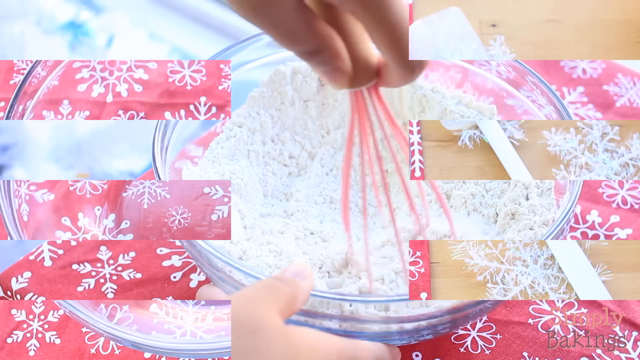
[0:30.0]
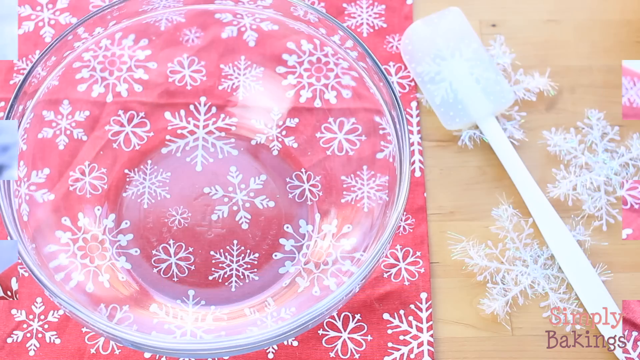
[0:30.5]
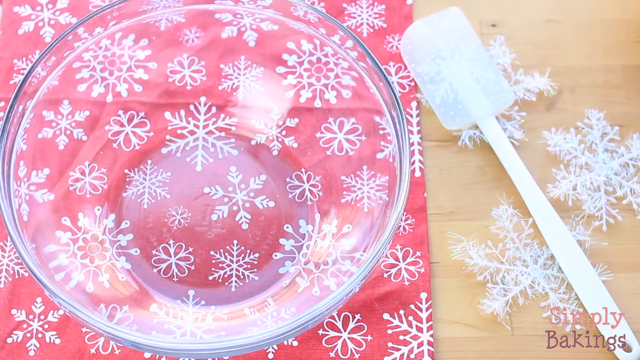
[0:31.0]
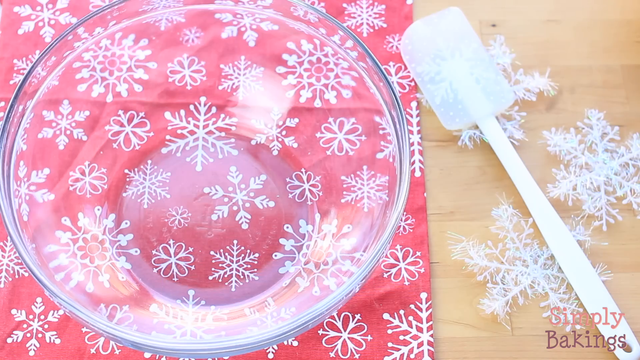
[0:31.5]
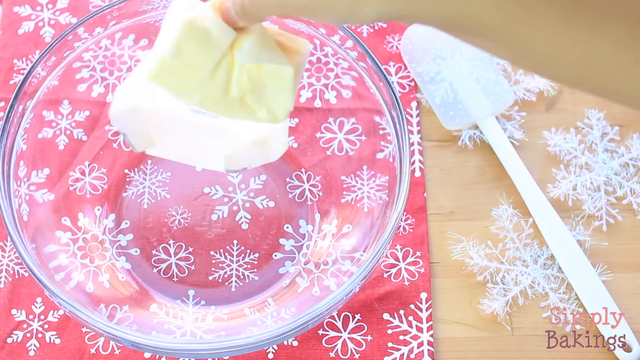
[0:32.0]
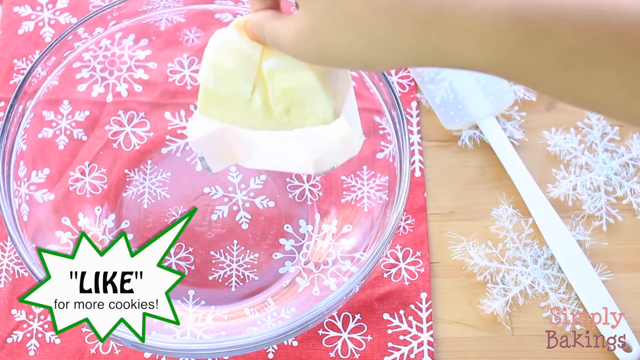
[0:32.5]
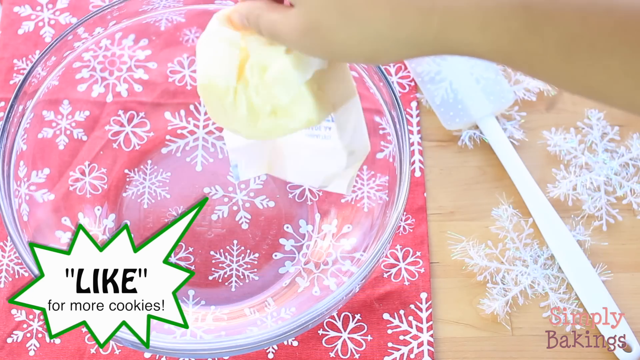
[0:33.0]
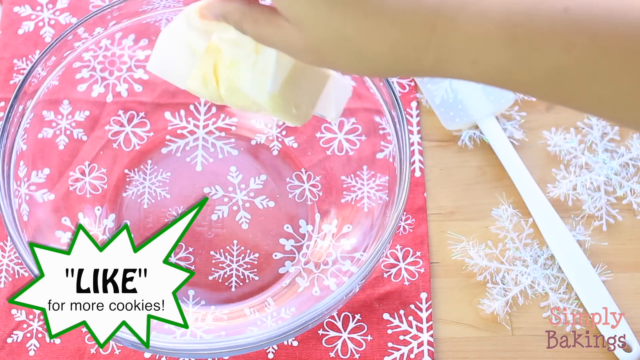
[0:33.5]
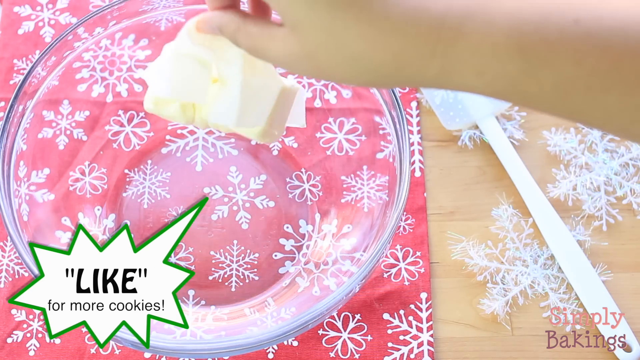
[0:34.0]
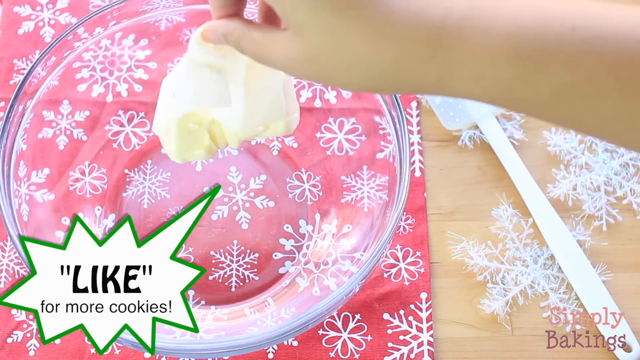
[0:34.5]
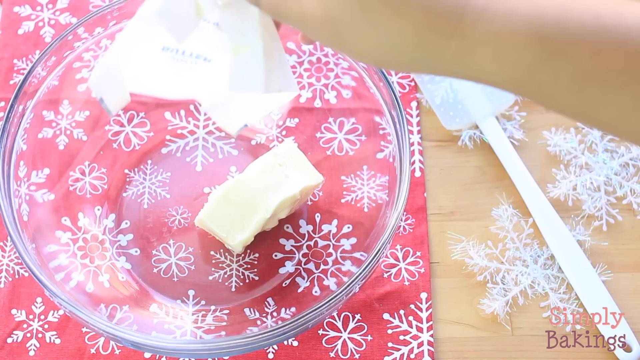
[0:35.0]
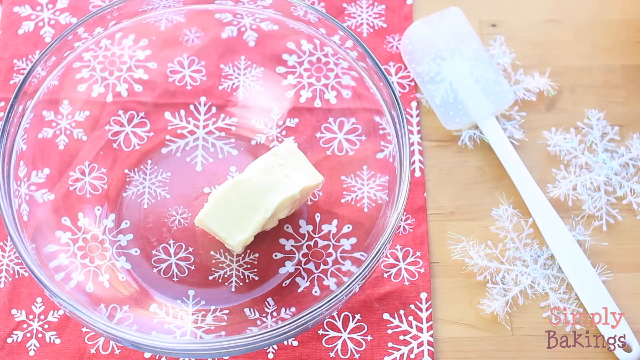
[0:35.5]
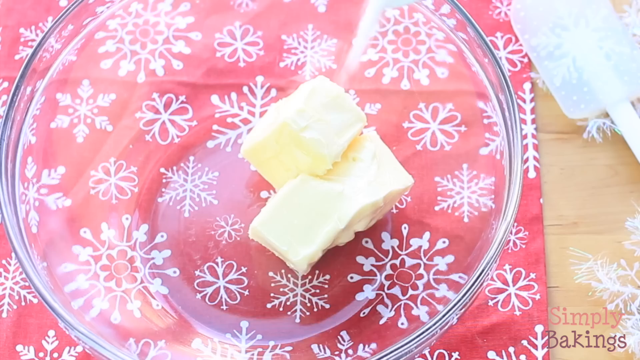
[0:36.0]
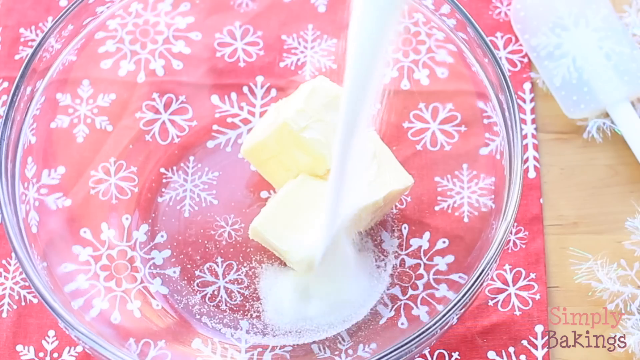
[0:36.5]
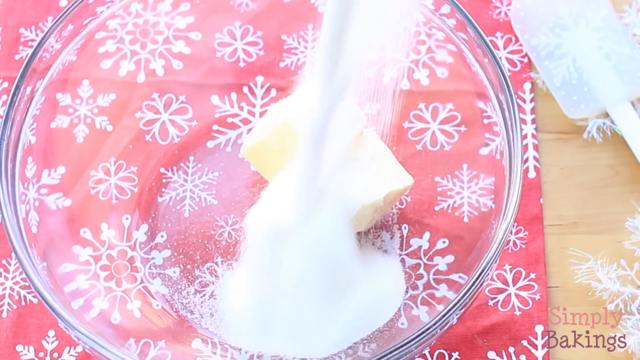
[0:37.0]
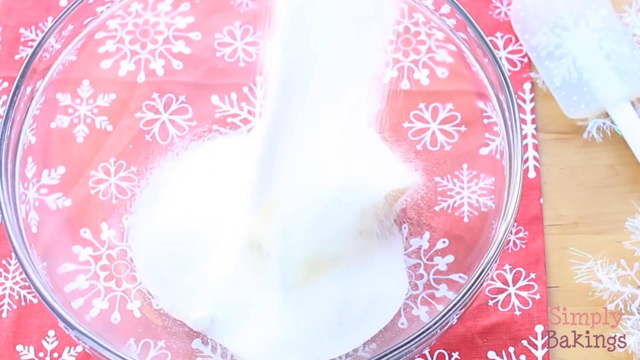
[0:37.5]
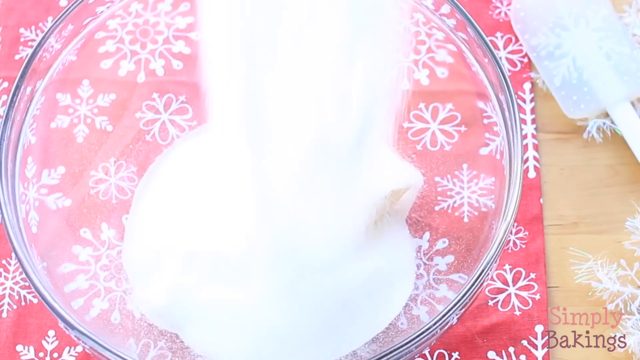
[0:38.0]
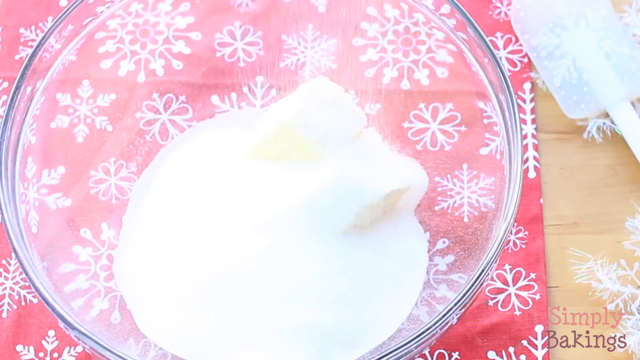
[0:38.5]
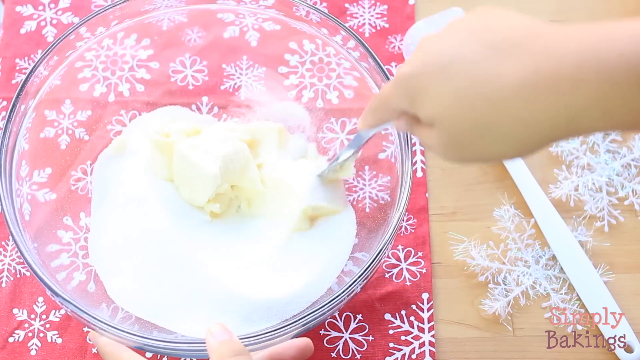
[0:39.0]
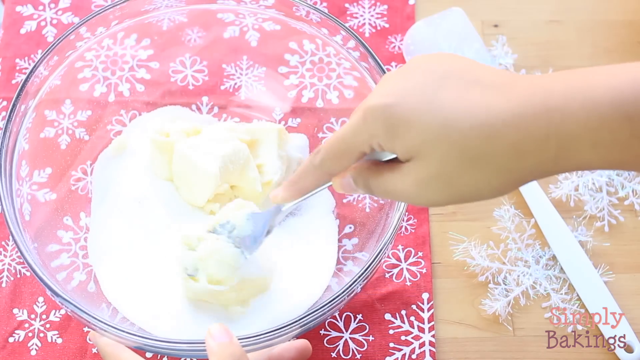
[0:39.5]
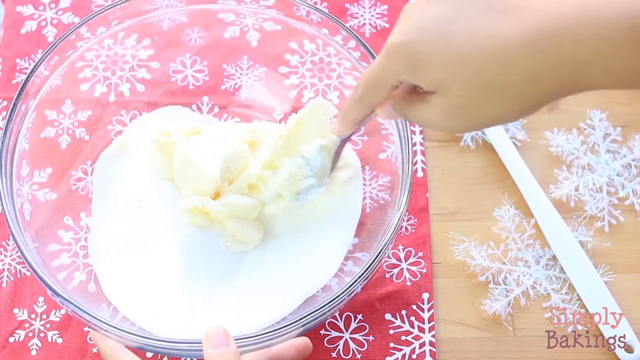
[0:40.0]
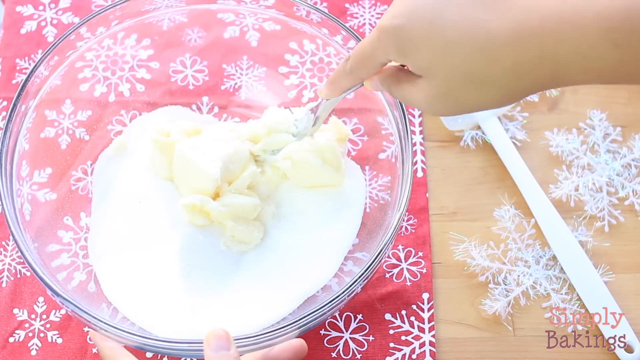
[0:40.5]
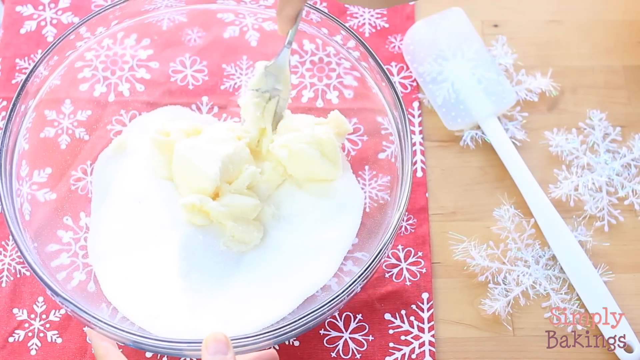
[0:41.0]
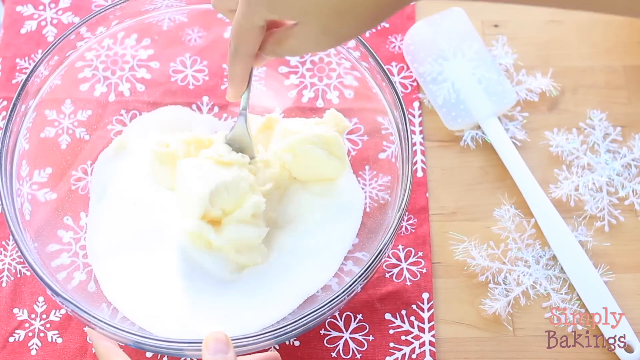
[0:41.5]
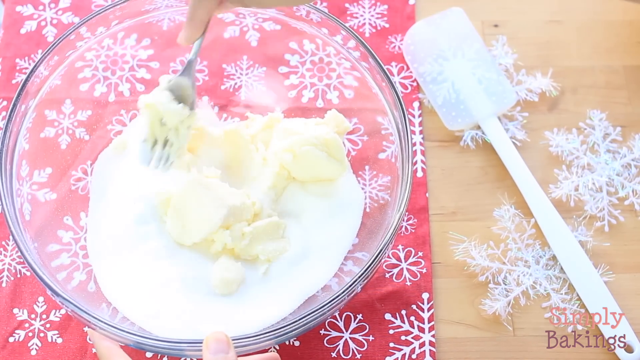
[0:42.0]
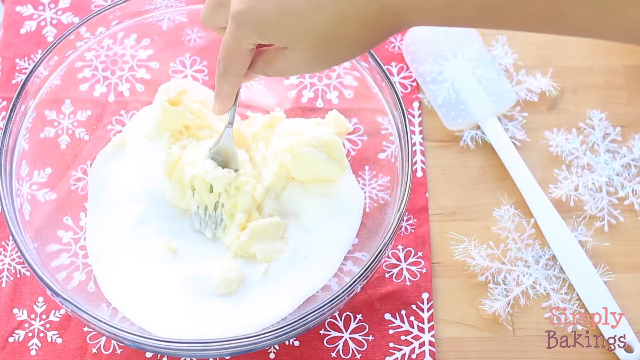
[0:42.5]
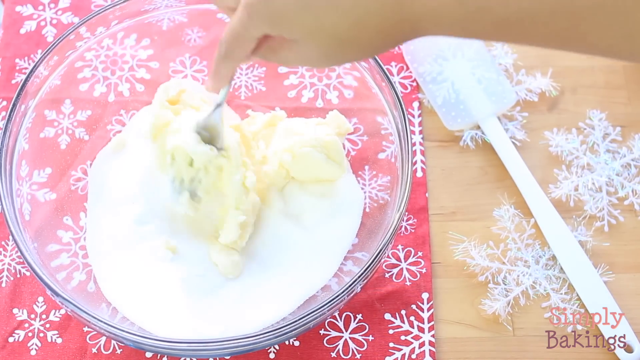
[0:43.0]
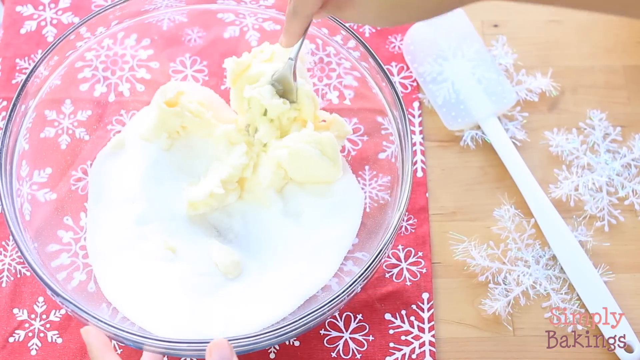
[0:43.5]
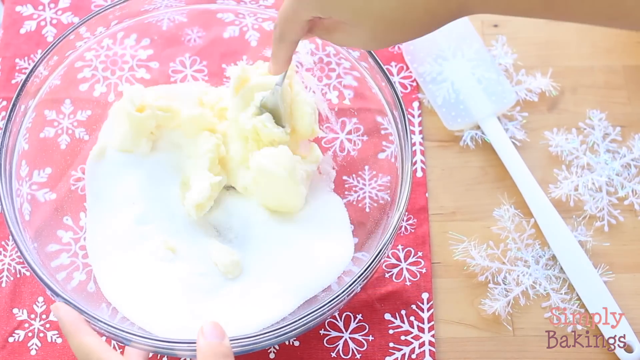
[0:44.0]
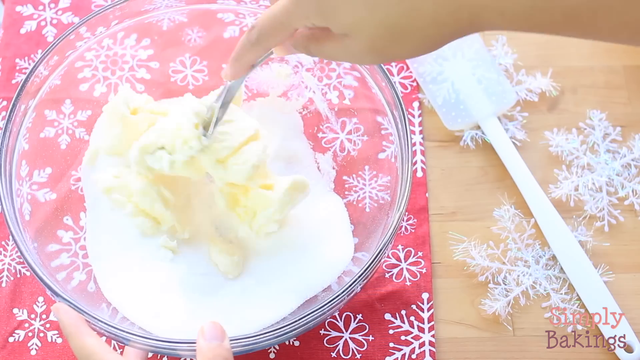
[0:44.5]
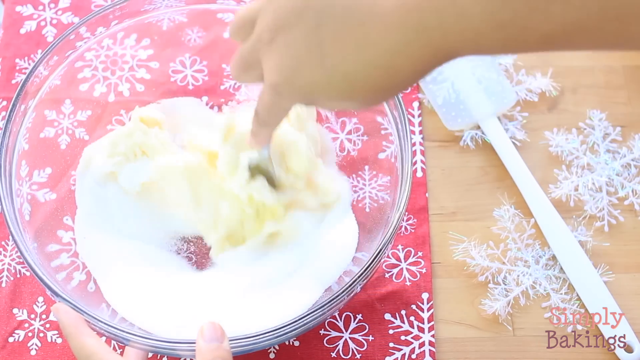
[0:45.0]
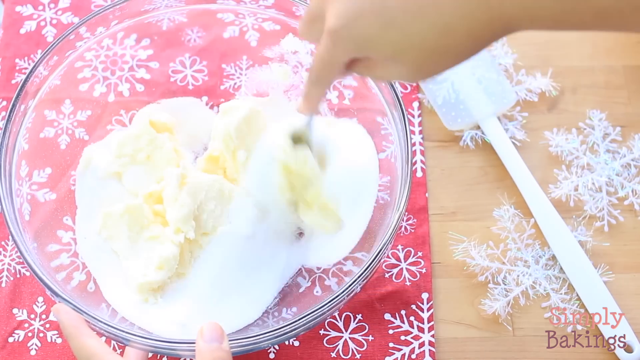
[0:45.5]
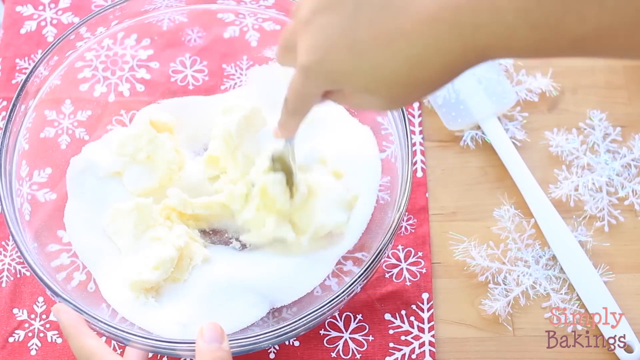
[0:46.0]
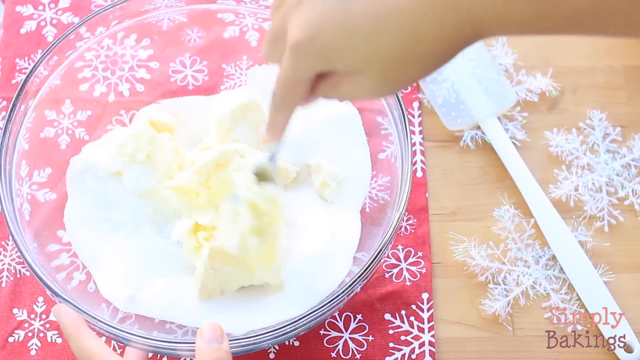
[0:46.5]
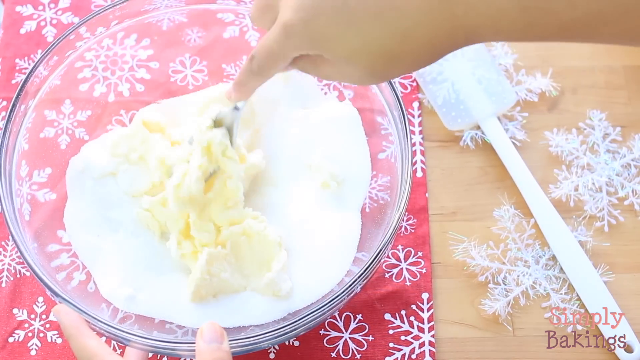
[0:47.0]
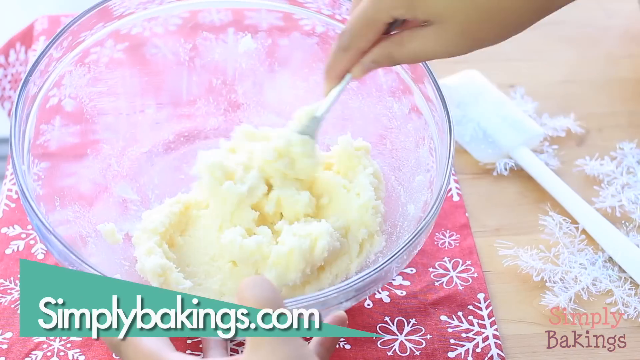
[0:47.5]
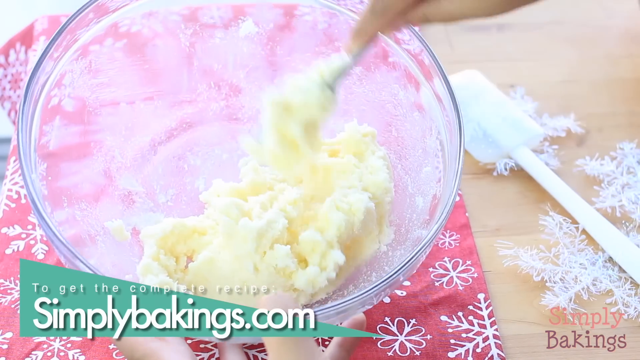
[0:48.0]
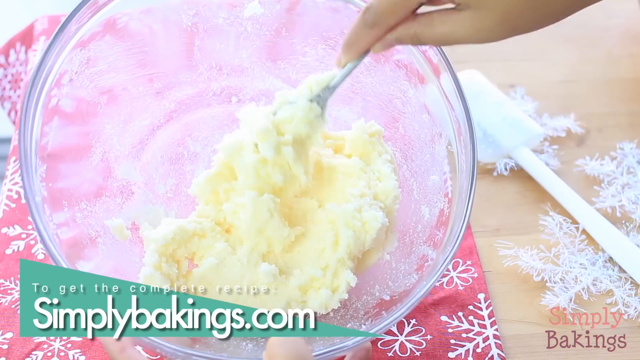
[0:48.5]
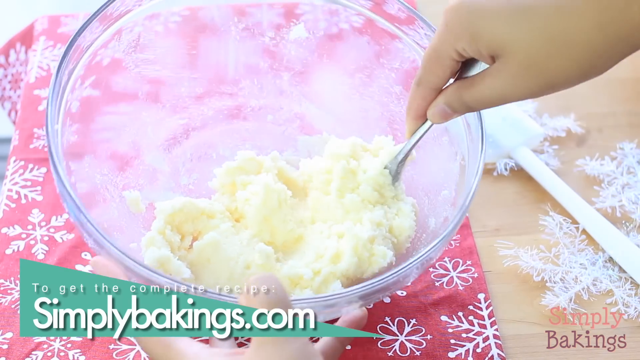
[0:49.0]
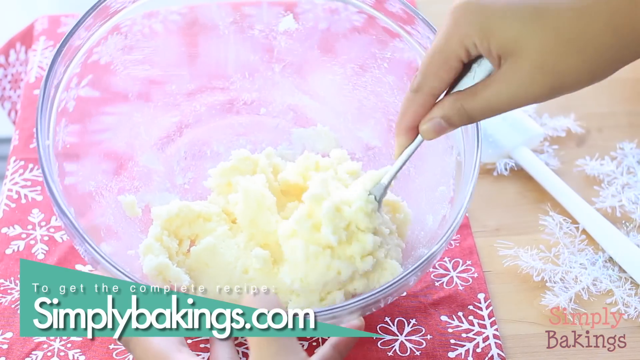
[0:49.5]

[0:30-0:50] A clean, clear glass bowl is on the same cloth with white snowflakes on a red background, with snowflakes all around. The person making the cookie batch puts yellow room-temperature butter into the bowl. A white spatula with a fairly large picture of a snowflake on it is laying on the table, ready to be used. After the butter, the person adds a lot of white cane sugar, then uses a silver fork to break down the butter and crumble it as much as possible into the sugar, until it turns into a buttery, sugary crumble.